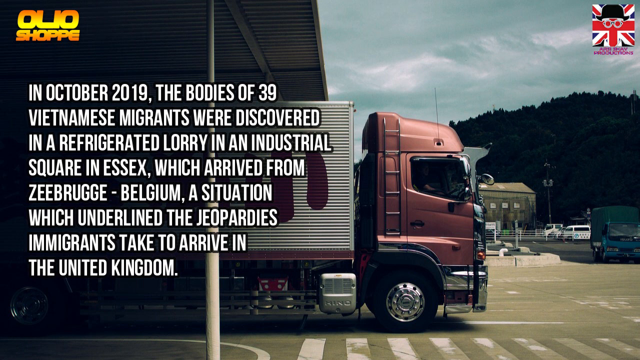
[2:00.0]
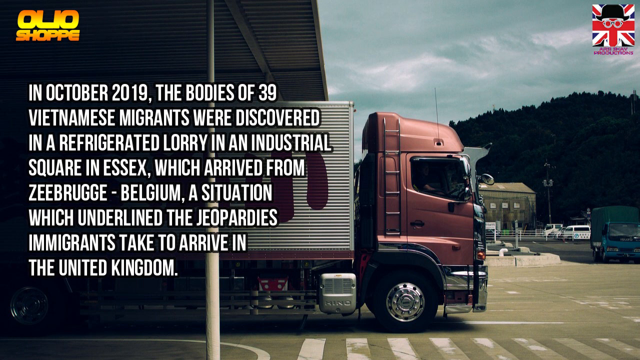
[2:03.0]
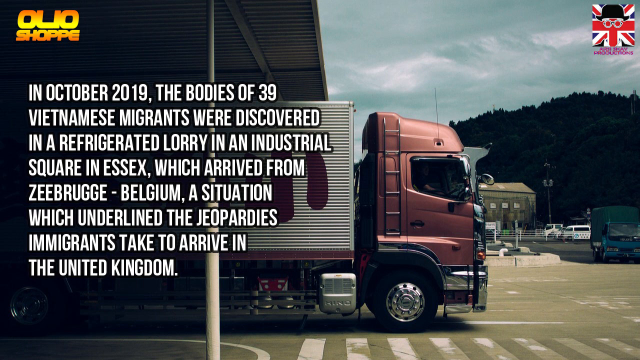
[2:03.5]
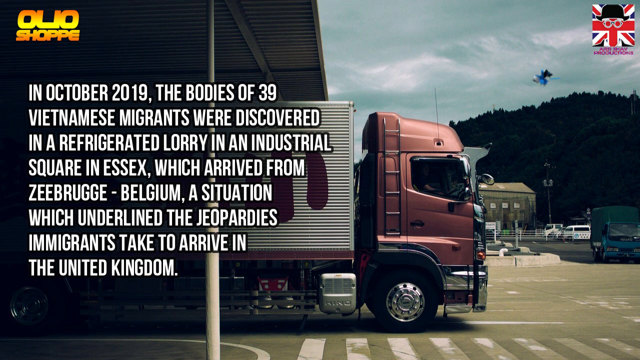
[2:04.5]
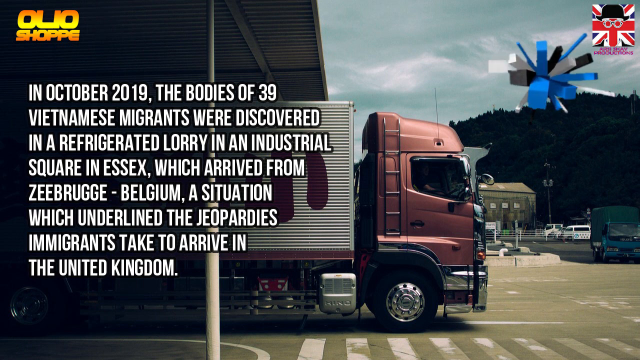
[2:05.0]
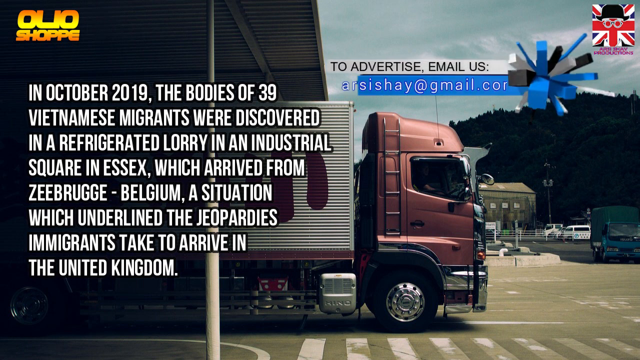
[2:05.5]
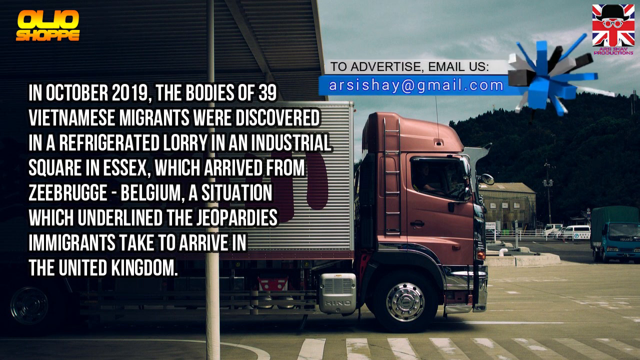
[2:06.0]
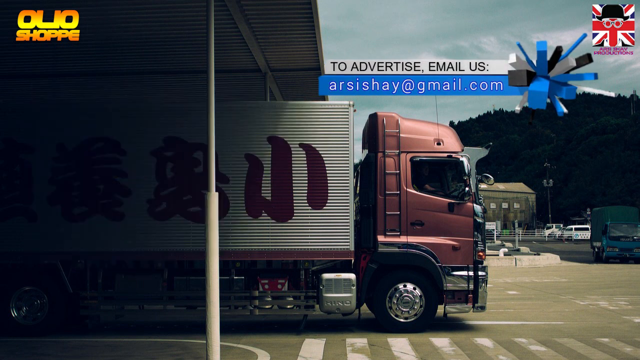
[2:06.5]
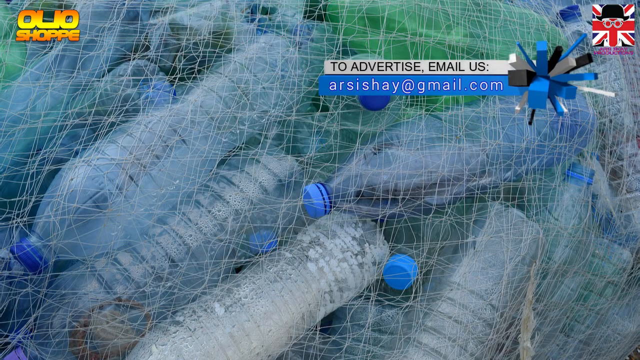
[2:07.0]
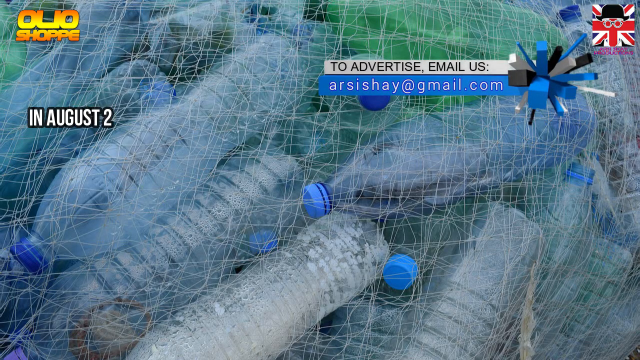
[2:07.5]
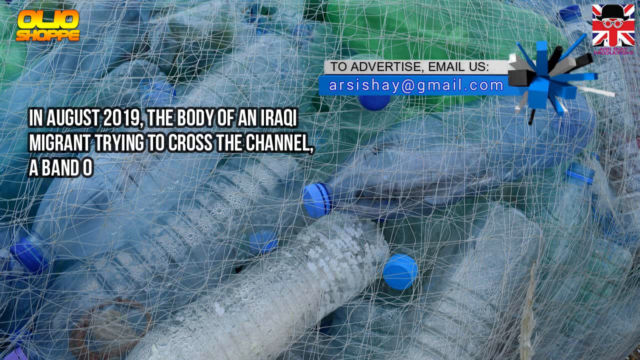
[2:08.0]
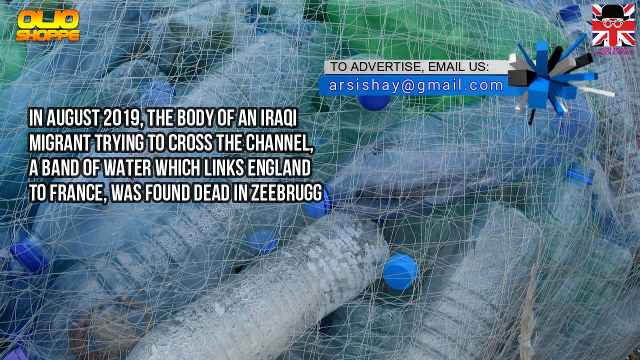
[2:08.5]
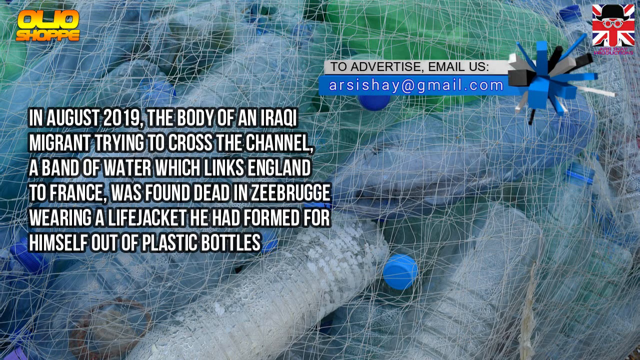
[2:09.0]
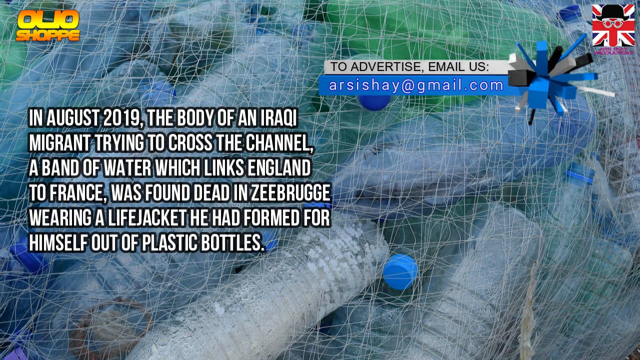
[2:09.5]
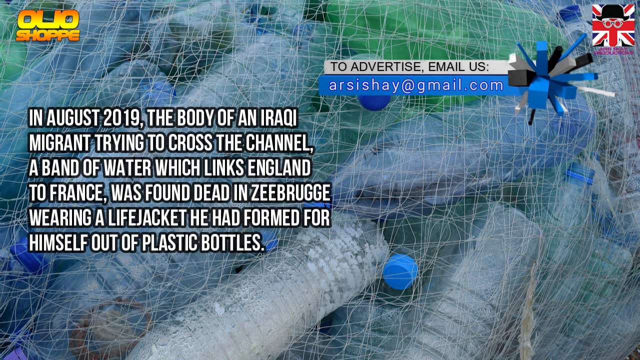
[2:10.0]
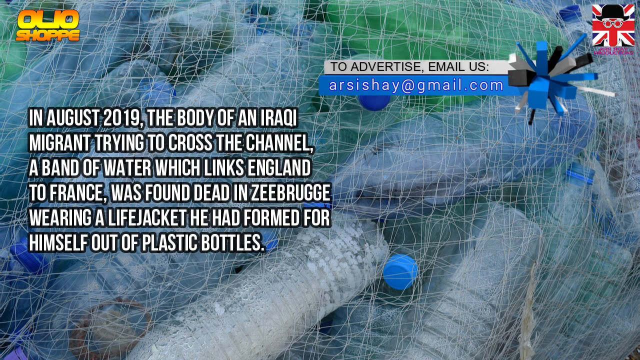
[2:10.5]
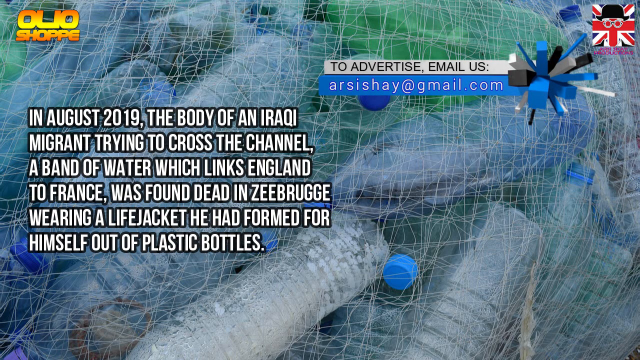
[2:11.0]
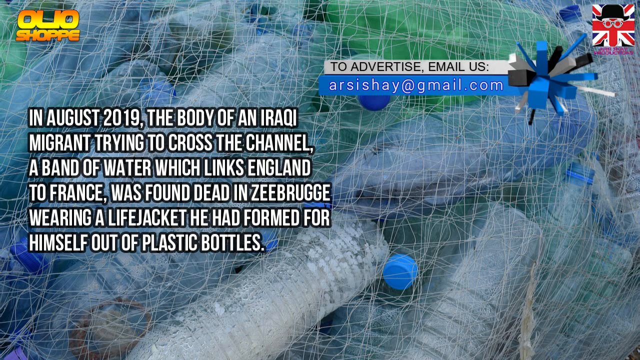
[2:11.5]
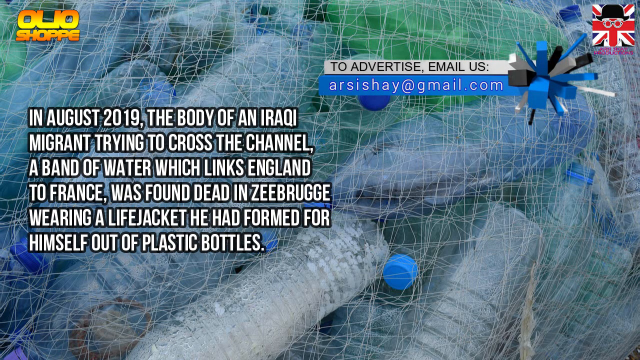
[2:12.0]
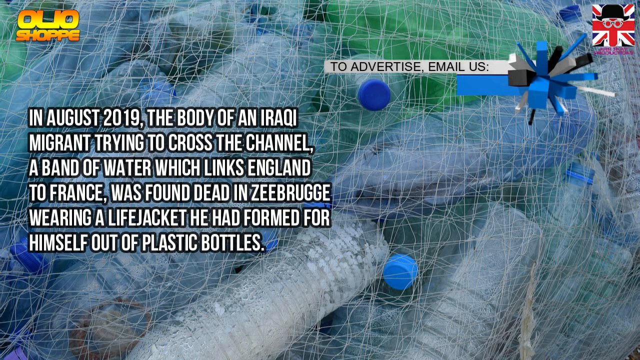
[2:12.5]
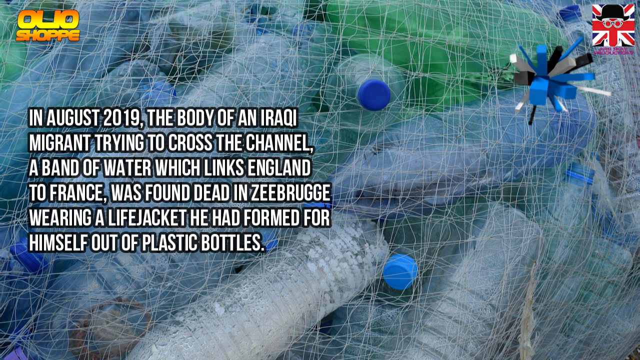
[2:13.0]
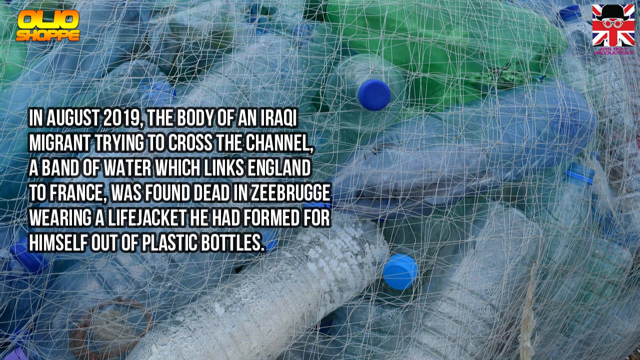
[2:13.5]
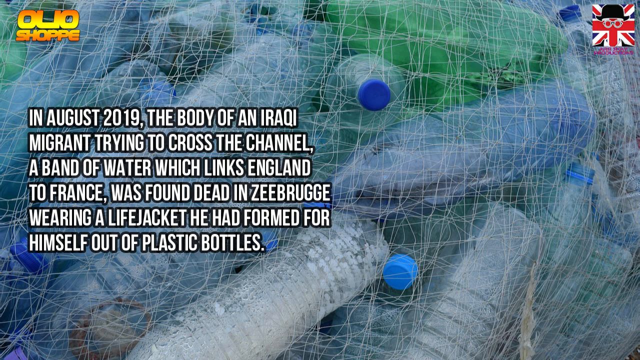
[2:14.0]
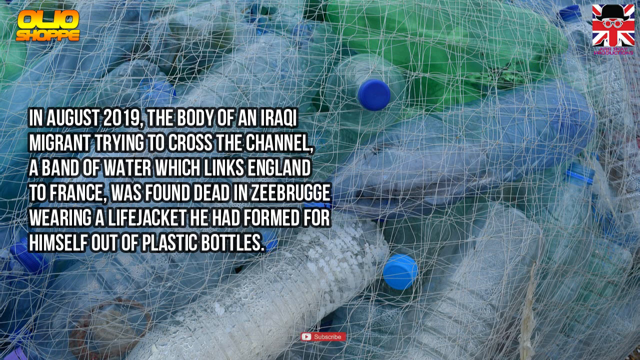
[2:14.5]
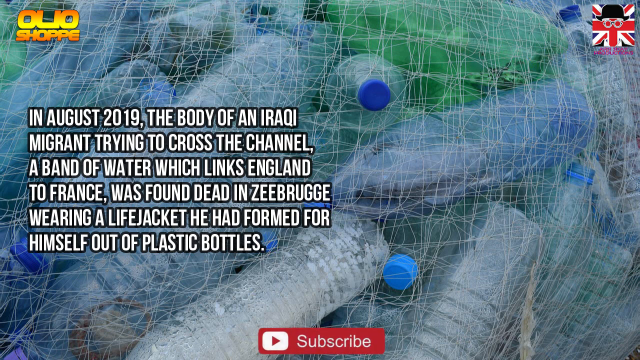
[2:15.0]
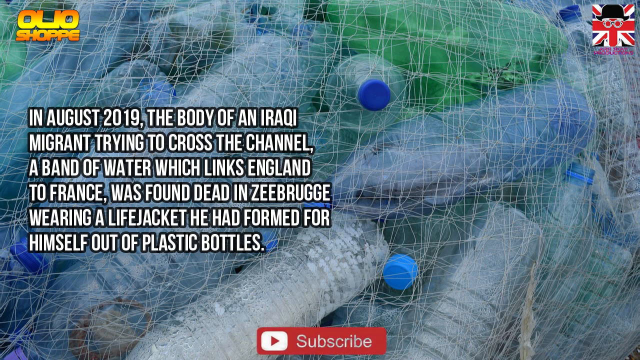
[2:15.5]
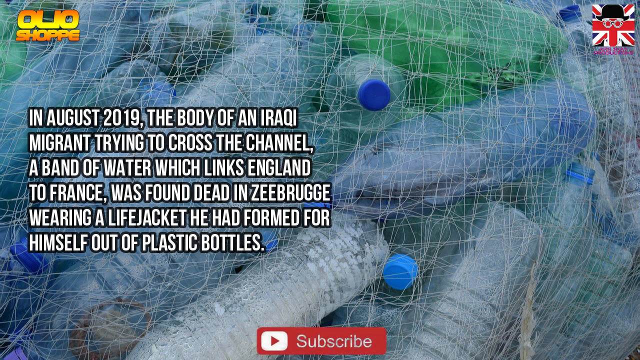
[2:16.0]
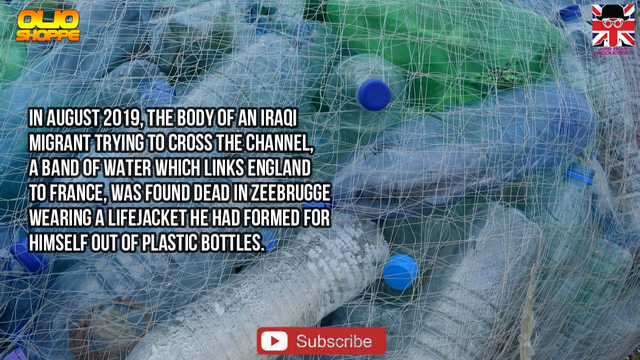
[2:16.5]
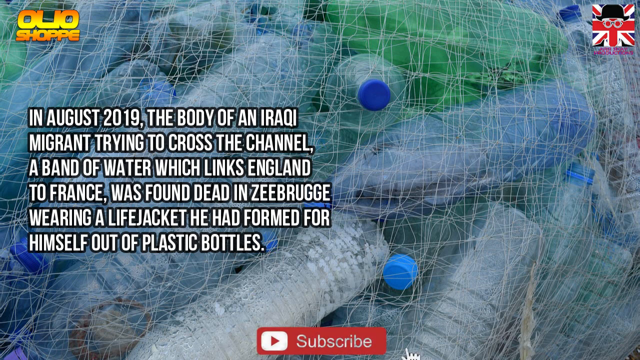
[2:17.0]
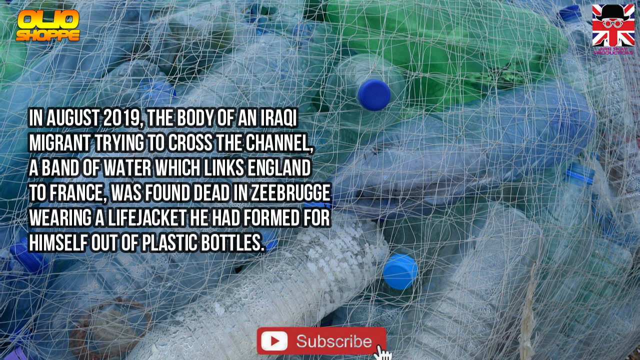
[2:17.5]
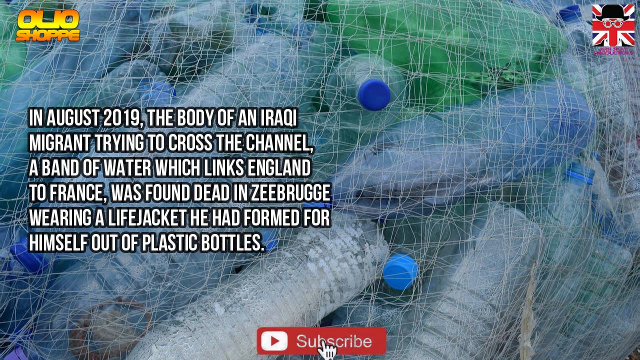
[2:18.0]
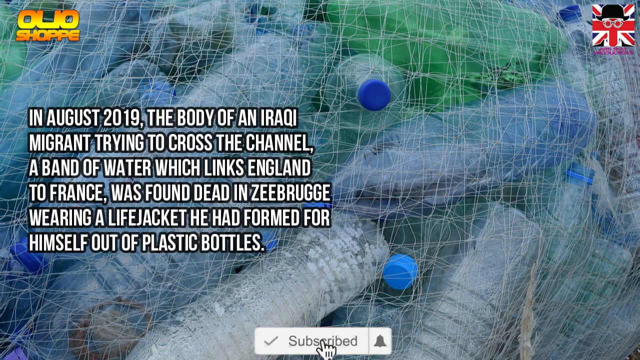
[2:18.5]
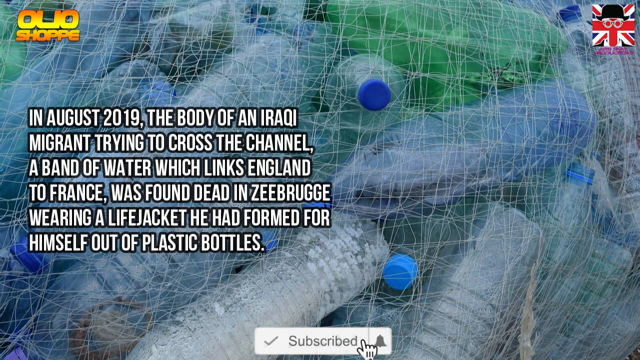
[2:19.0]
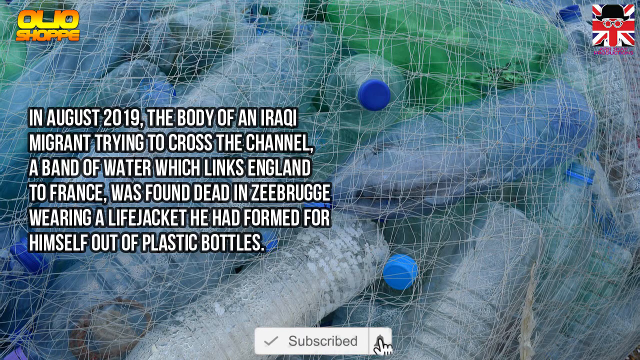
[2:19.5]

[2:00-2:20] The small cluster graphic about emailing and the website appears again, now in the upper right next to the British flag. The scene switches to a bunch of water bottles that look like they are captured in a white net. White text on the left reads "in August 2019, the body of an Iraqi migrant trying to cross the channel, a band of water which links England to France was found dead in Zeebrugge wearing a life jacket he had formed for himself out of plastic bottles." The upper-right graphic with the cluster of blocks then disappears. The view looks over the top of the weak netting holding all the blue-capped water bottles; it looks like a makeshift net that is not very strong, and this forms the background for this section, which apparently stays the same. The British flag in the upper right has a black bowler hat and a pair of clear-framed glasses right underneath it, almost as if the flag makes a little face.